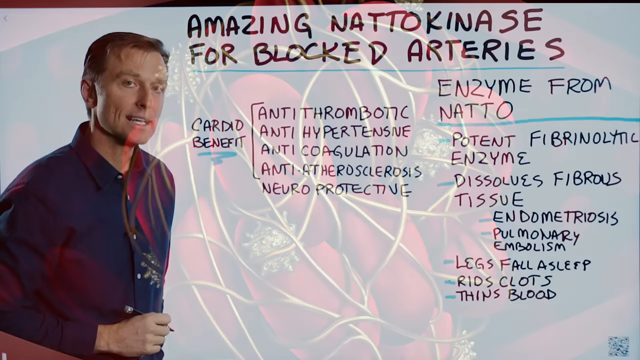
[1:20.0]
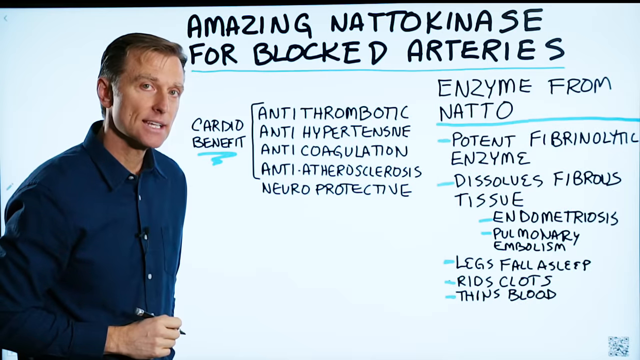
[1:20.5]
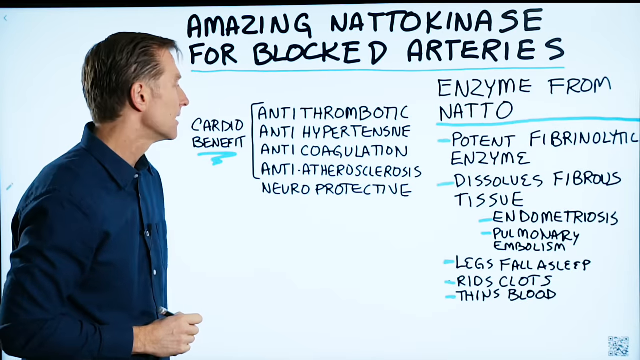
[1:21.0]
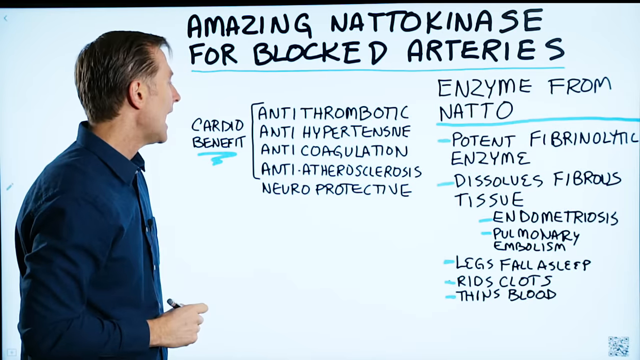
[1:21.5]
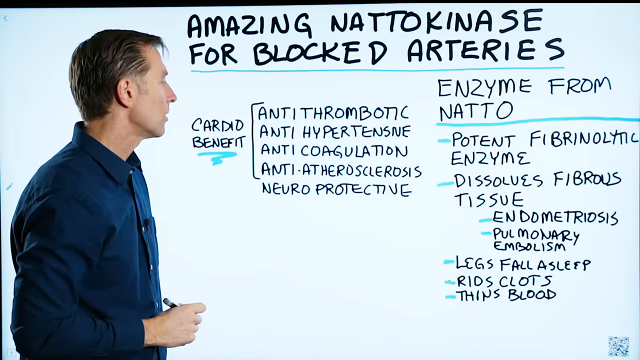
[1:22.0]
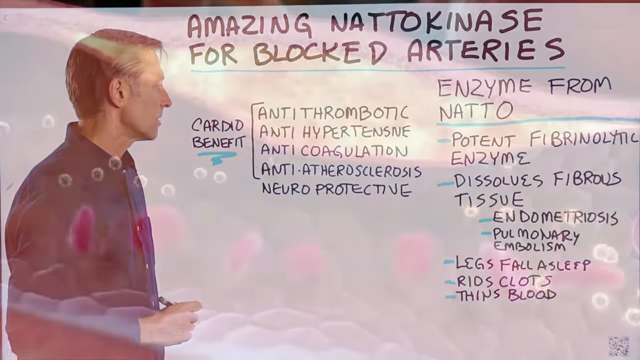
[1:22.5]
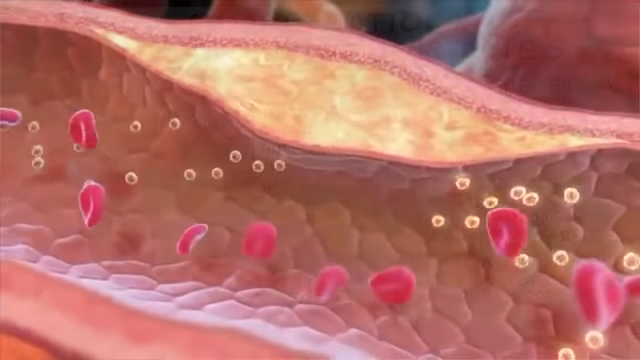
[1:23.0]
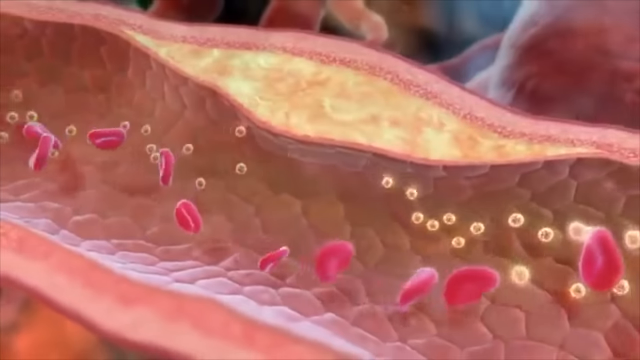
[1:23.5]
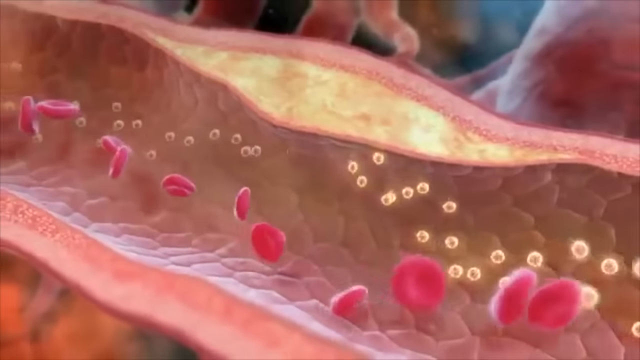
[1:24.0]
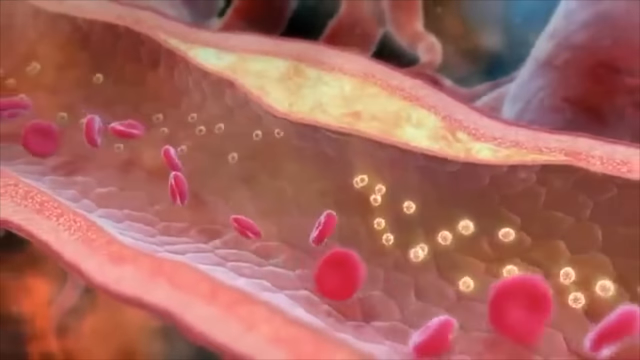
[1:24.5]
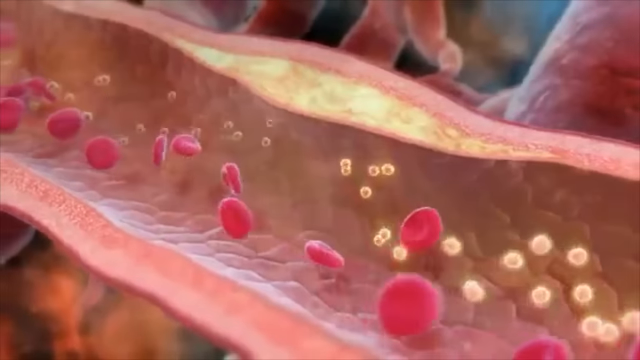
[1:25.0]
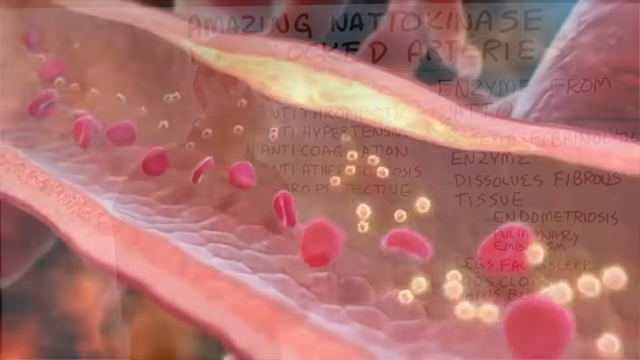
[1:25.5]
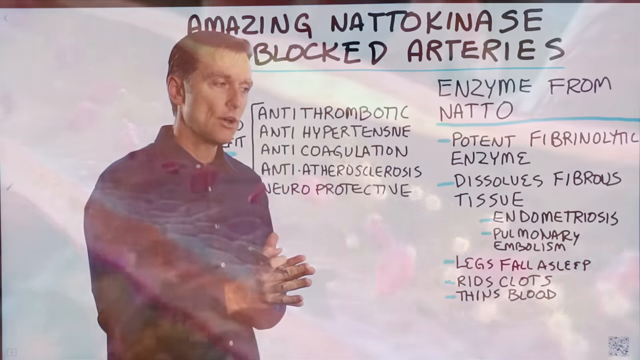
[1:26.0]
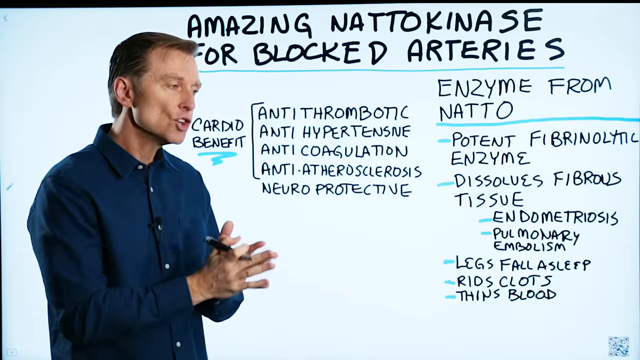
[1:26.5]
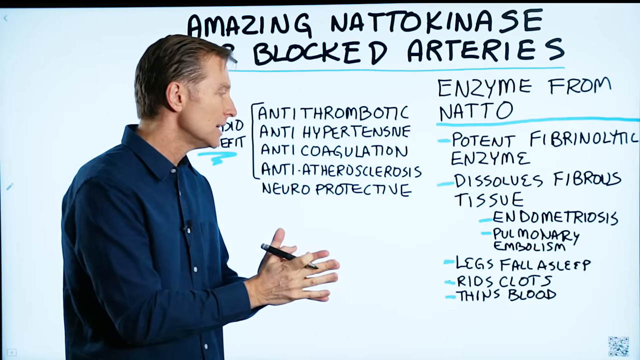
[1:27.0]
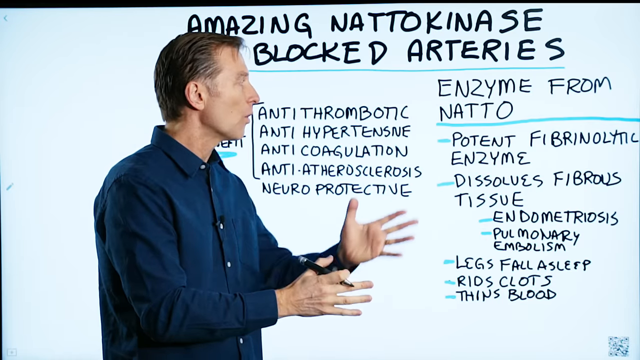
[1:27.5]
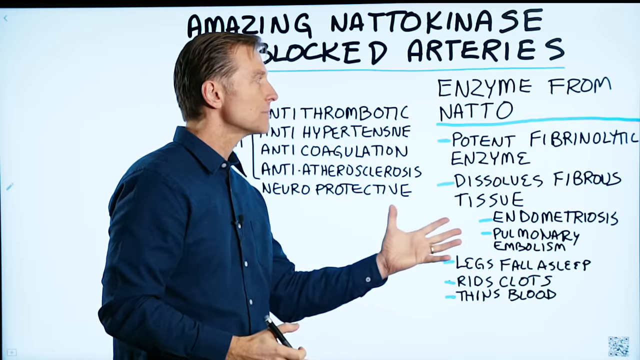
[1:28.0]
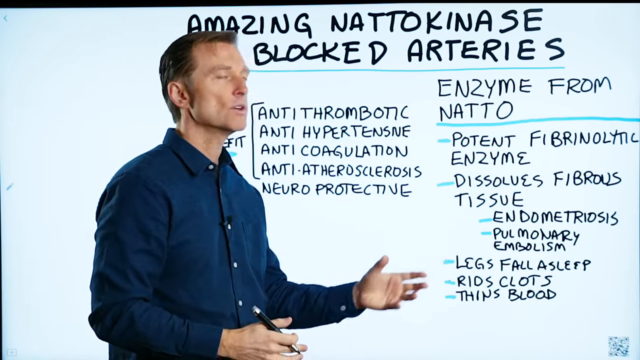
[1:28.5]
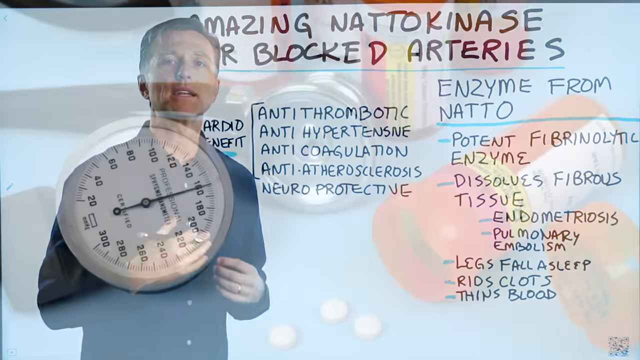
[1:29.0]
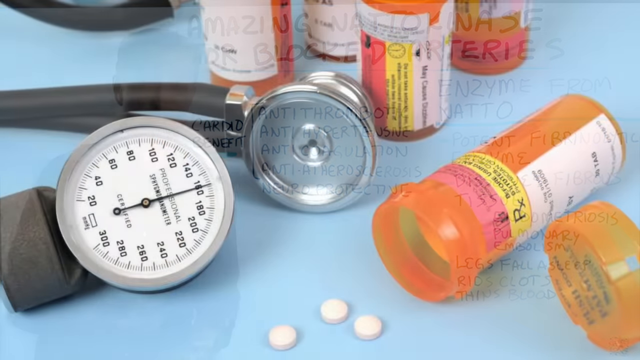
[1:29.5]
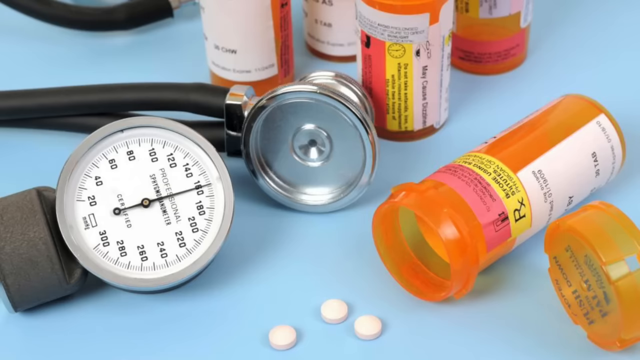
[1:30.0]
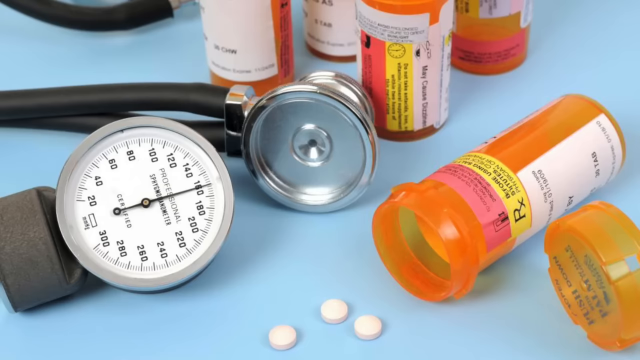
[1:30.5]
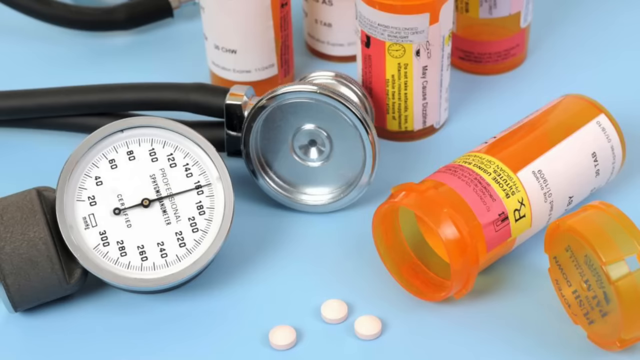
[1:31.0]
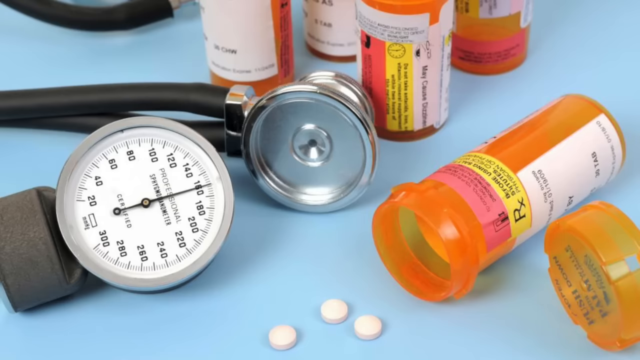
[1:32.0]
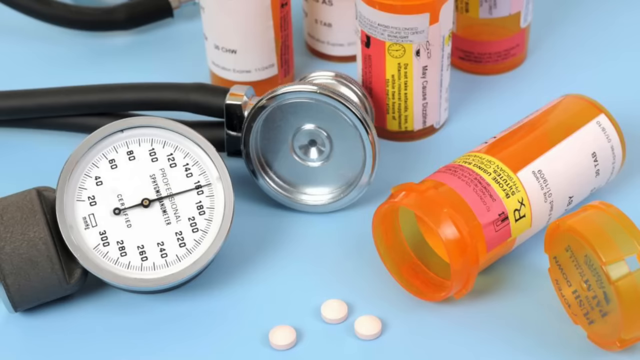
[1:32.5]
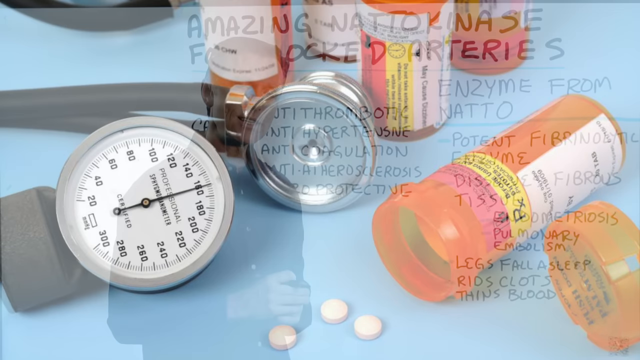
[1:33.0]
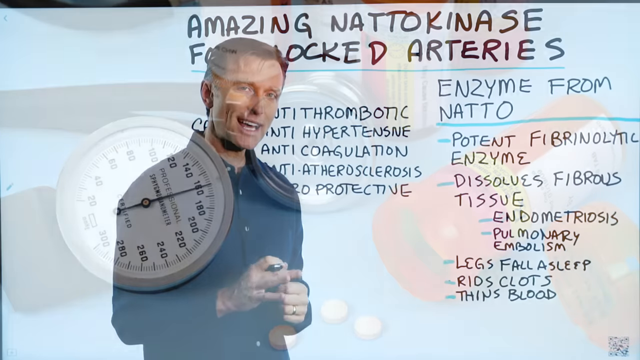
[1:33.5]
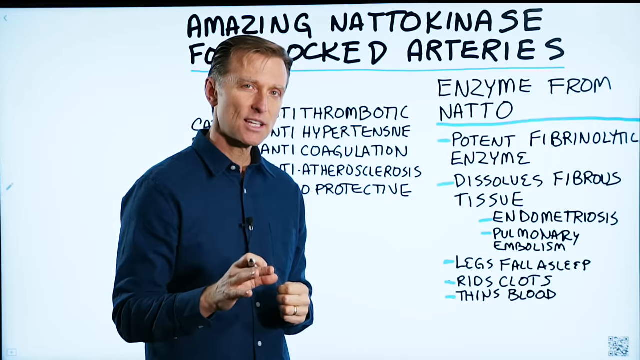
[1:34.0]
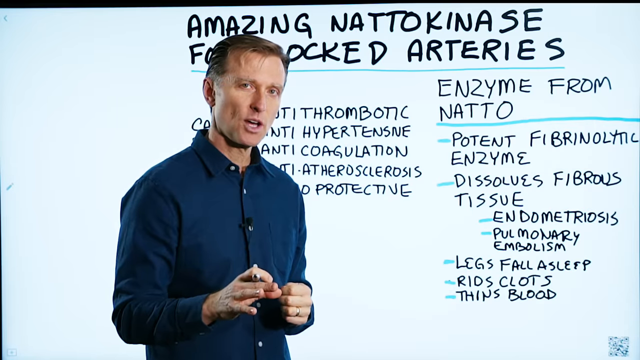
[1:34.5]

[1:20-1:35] The white man in the dark blue shirt stands in front of the whiteboard, talking, and the shot stays on him talking until it ends.